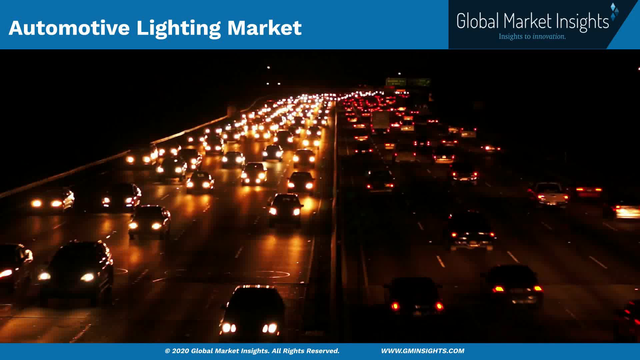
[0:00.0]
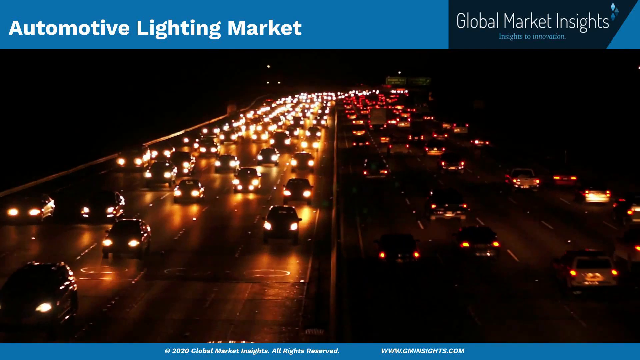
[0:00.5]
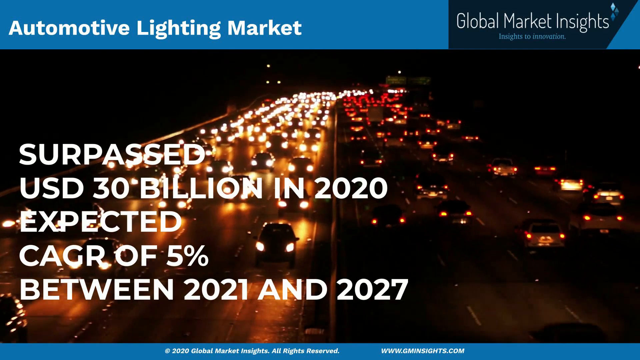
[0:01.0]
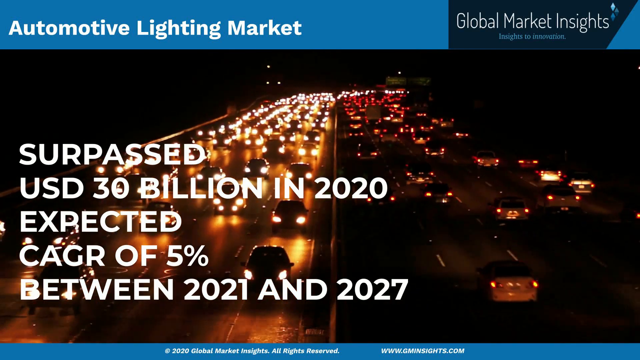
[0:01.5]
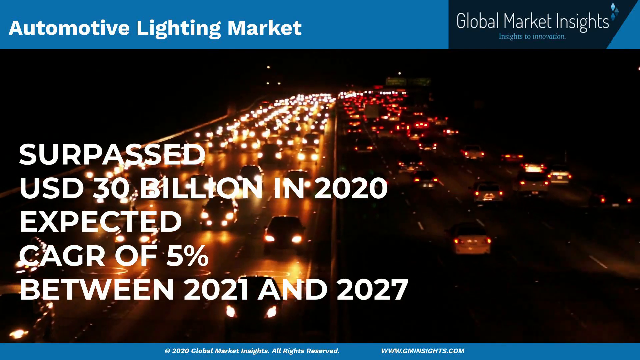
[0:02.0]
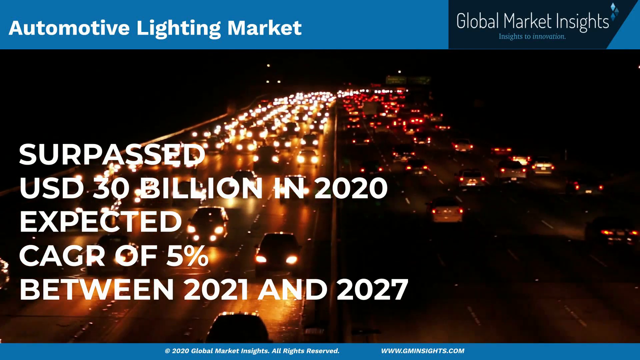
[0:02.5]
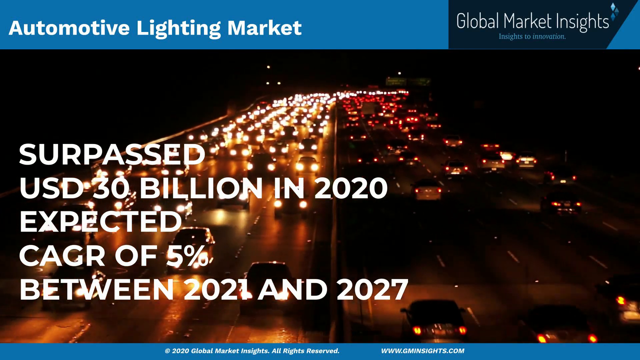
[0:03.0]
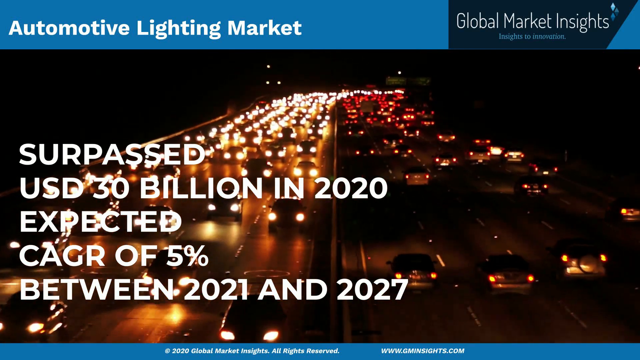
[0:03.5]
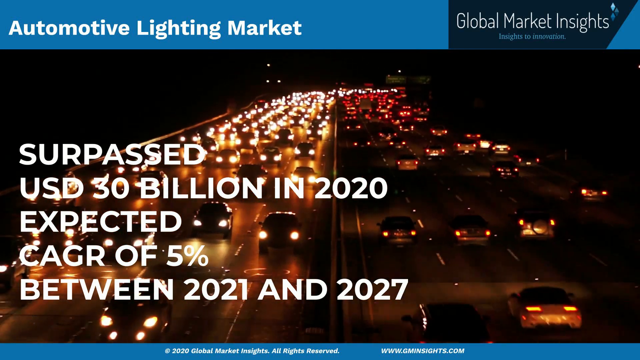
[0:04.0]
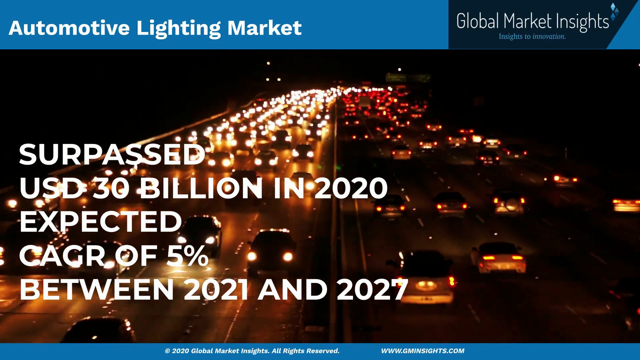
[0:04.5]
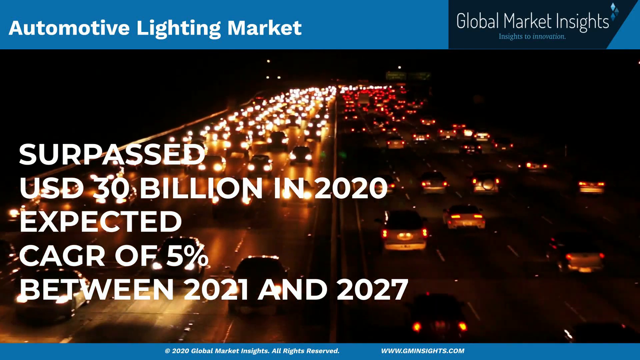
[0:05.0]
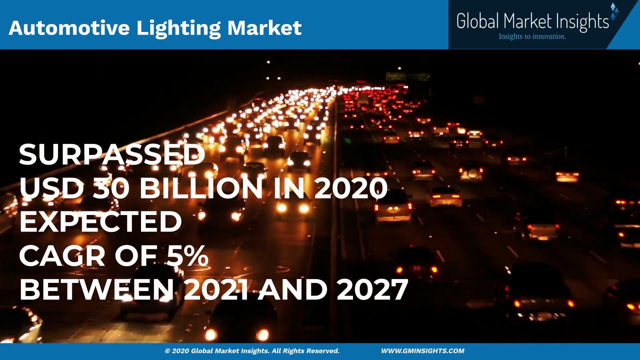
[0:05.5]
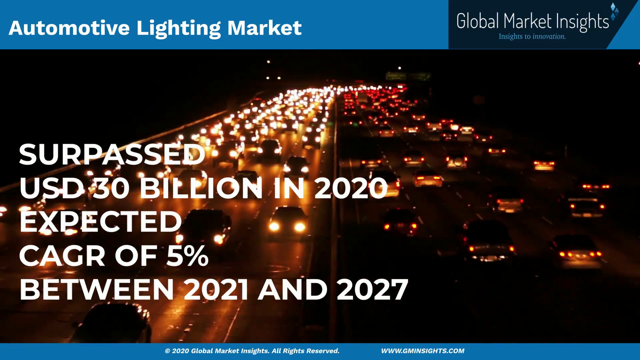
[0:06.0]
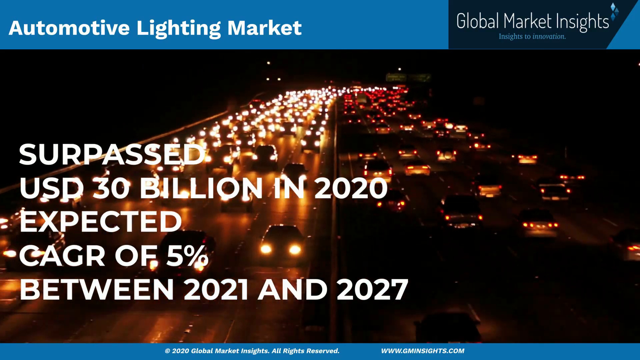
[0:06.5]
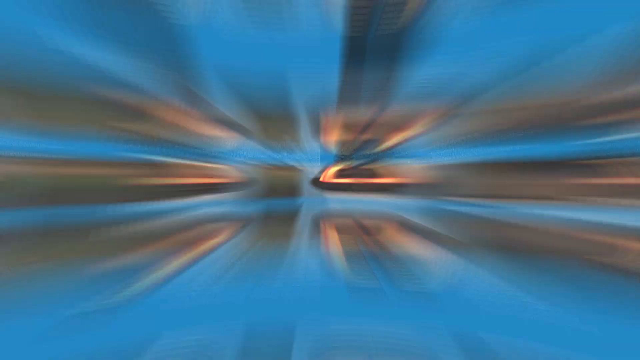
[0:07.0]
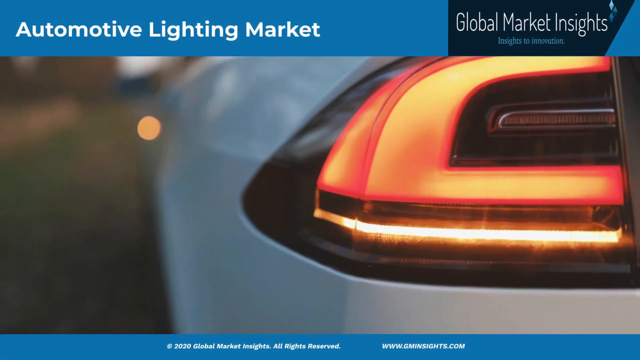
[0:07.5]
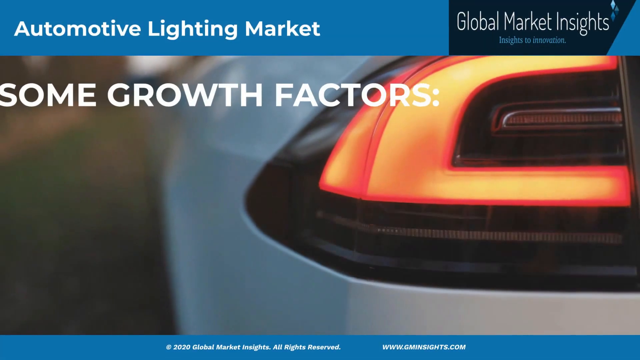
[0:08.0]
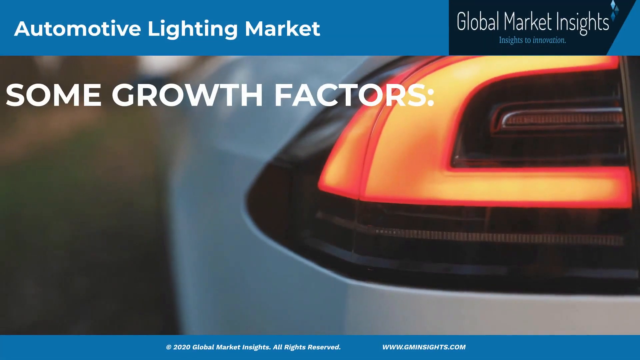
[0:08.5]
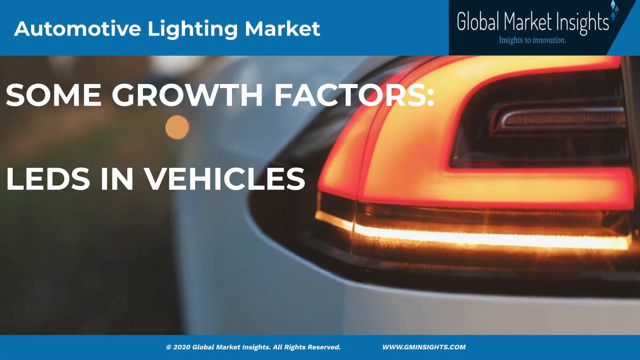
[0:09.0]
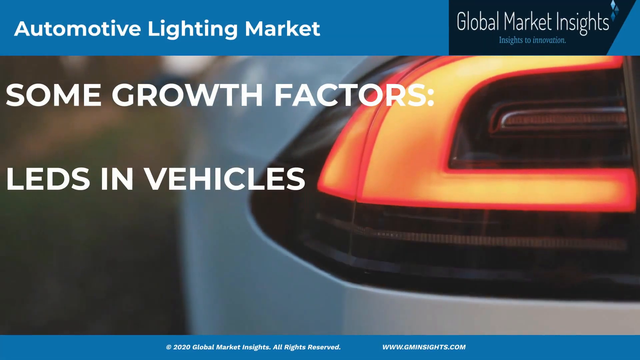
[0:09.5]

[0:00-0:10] The video appears to be about the automotive lighting market. A blue banner runs across the top, and the center of the screen shows a very busy highway with a lot of cars on it. The words "automotive lighting market" are in dark blue, while the highway is in a lighter color. The video then switches to what appears to be a slideshow. The first screen's text says "surpassed USD 30 billion in 2020 and expected CAGR of 5% between 2021 and 2027." A new slide features "automotive lighting market" and then says "leads and vehicle rapid development."